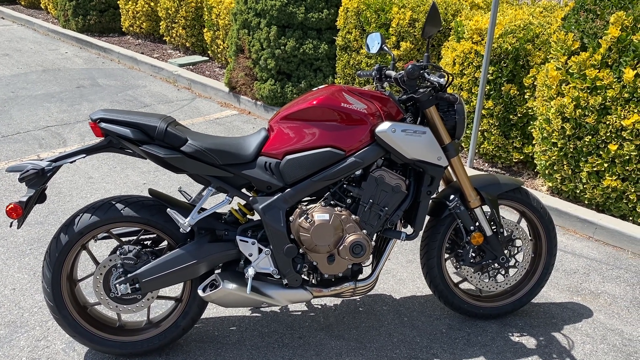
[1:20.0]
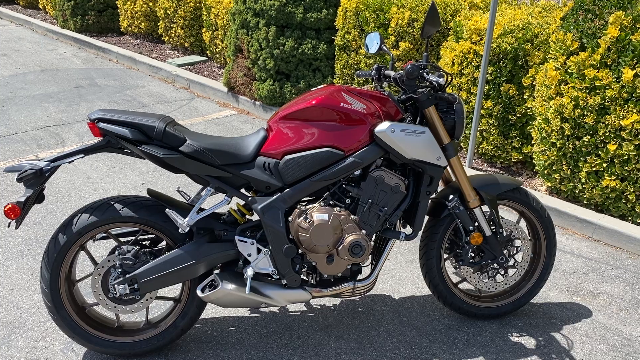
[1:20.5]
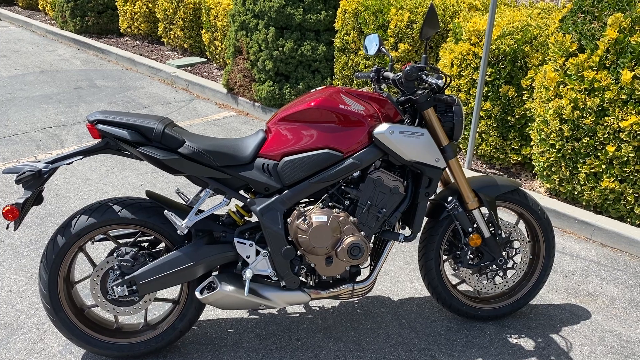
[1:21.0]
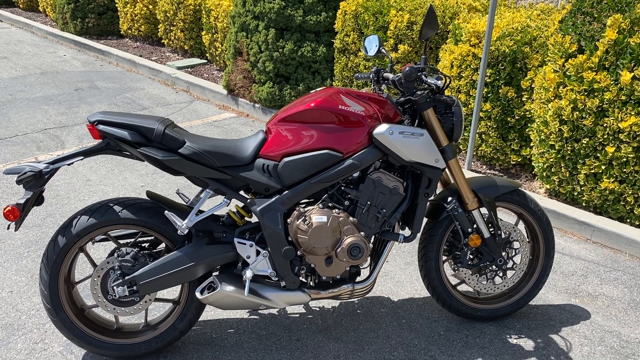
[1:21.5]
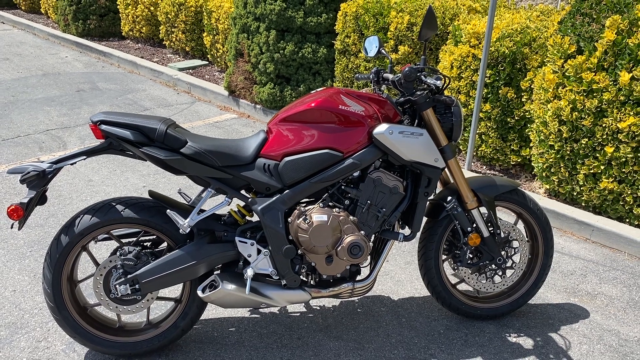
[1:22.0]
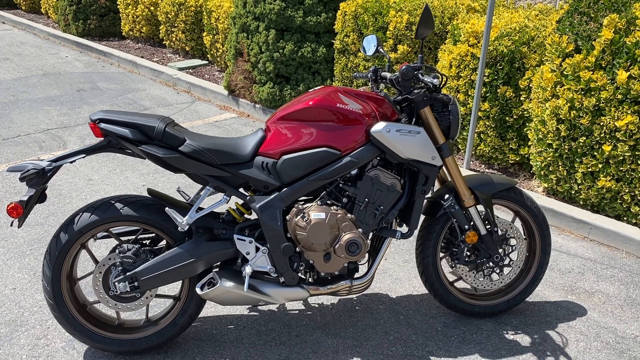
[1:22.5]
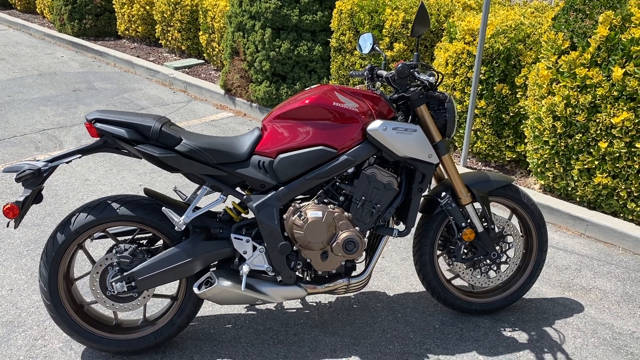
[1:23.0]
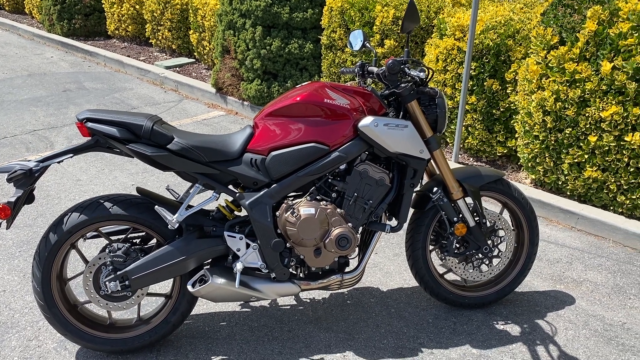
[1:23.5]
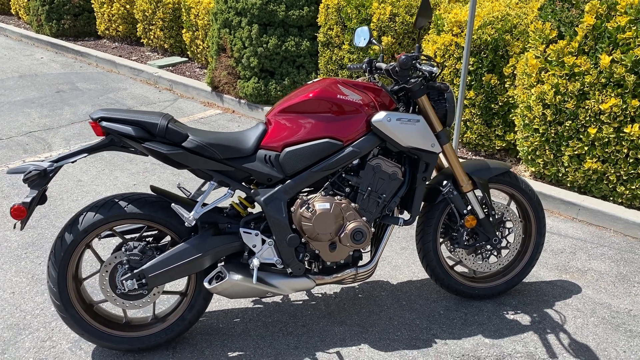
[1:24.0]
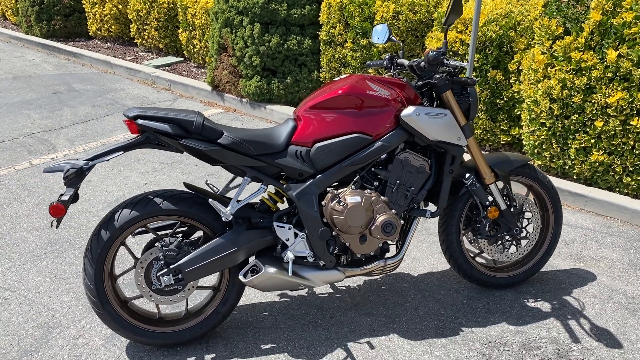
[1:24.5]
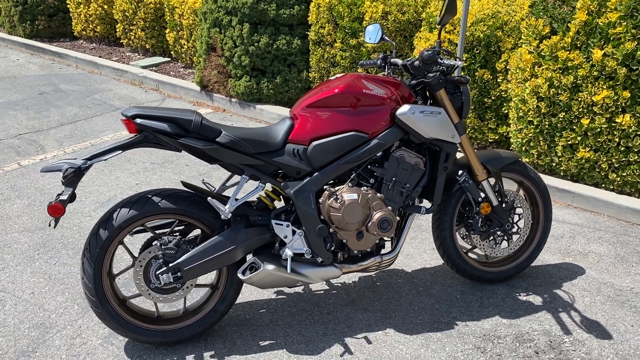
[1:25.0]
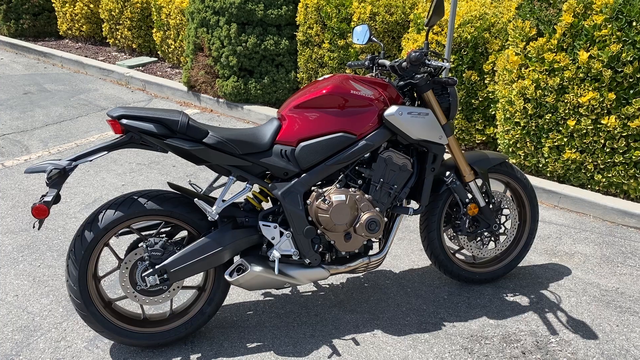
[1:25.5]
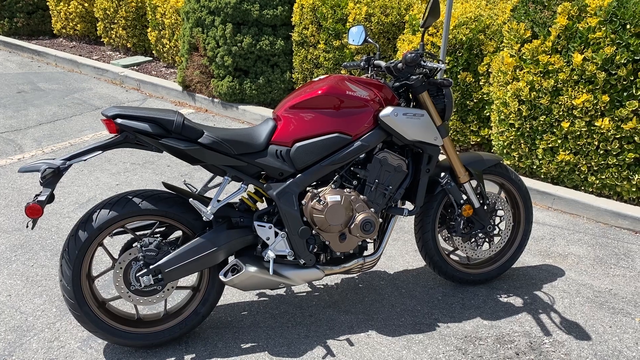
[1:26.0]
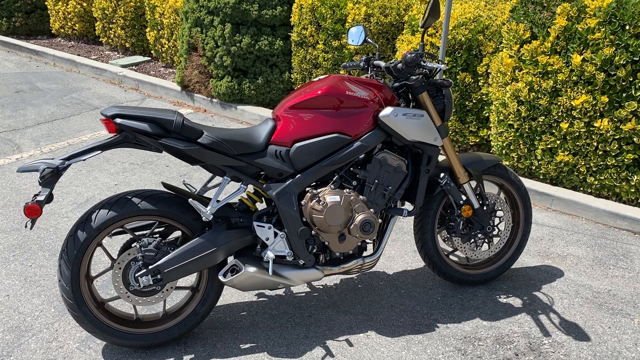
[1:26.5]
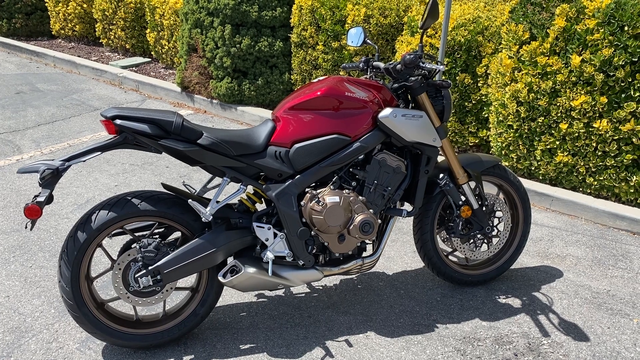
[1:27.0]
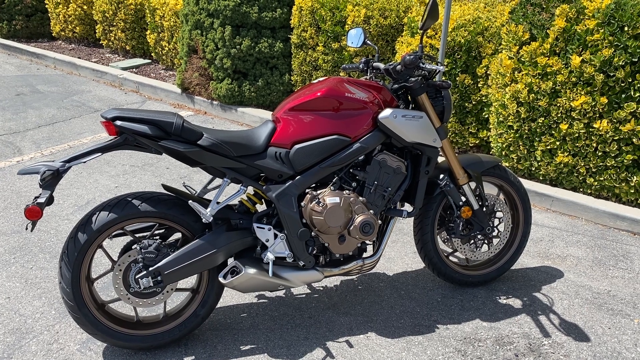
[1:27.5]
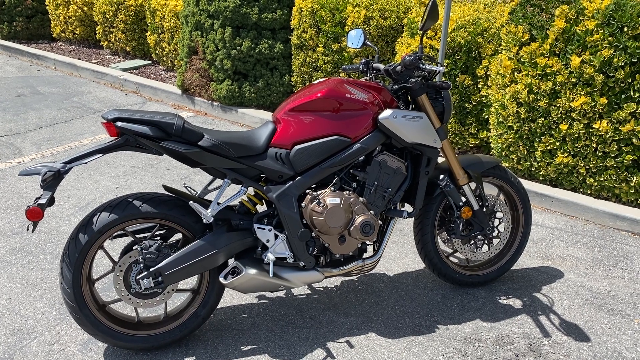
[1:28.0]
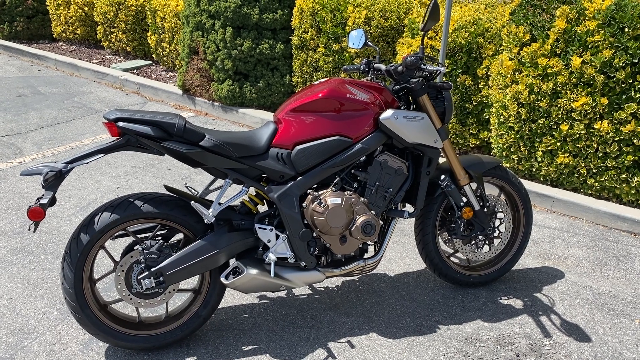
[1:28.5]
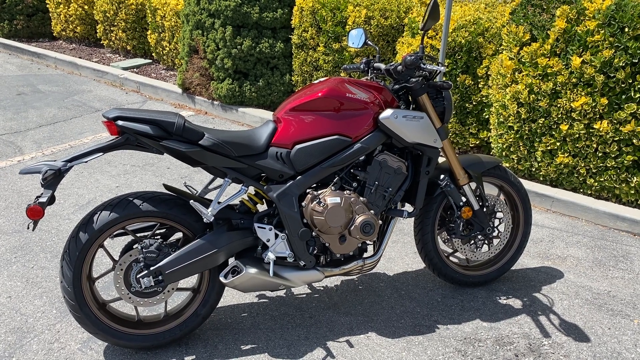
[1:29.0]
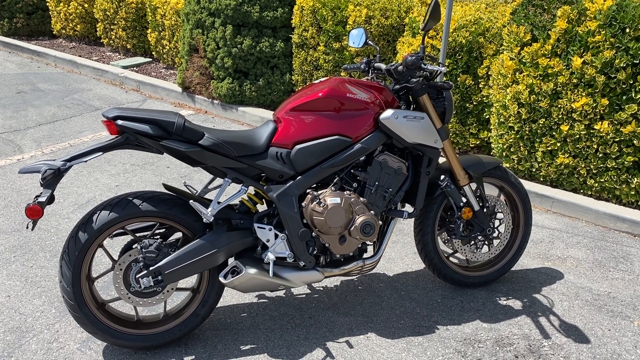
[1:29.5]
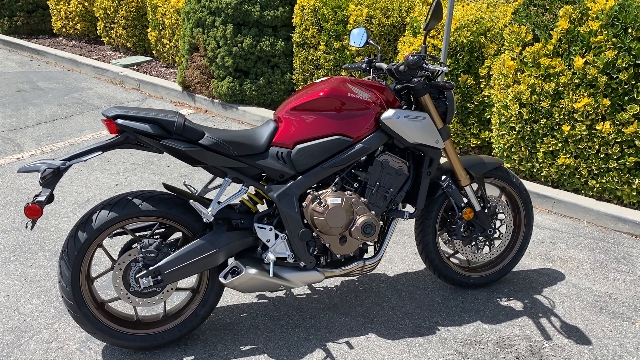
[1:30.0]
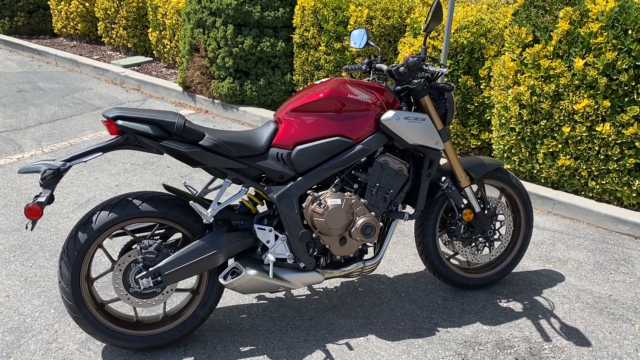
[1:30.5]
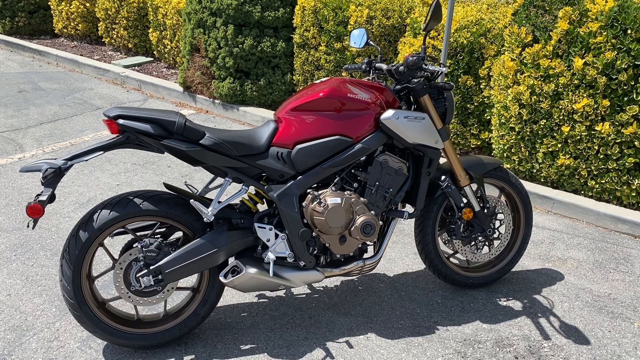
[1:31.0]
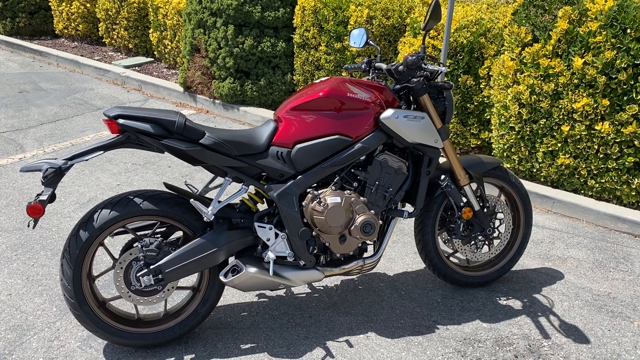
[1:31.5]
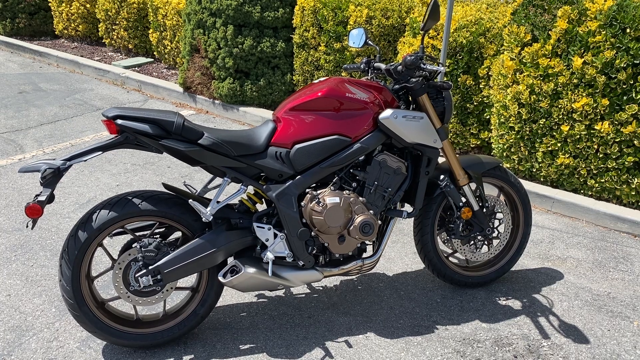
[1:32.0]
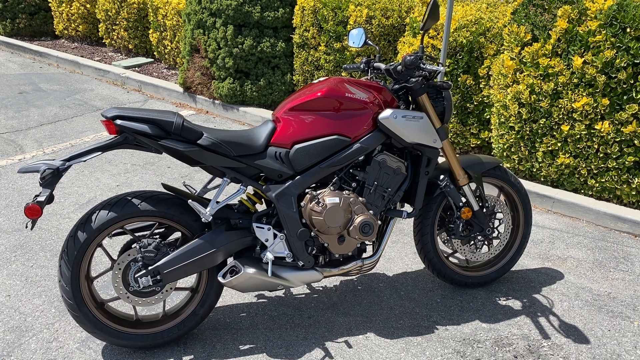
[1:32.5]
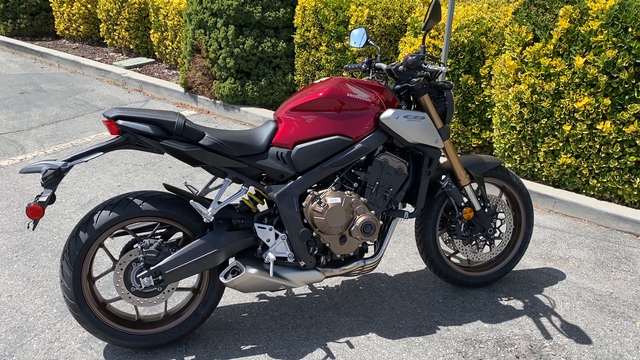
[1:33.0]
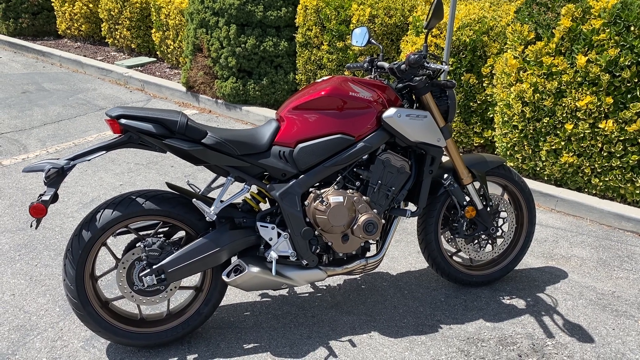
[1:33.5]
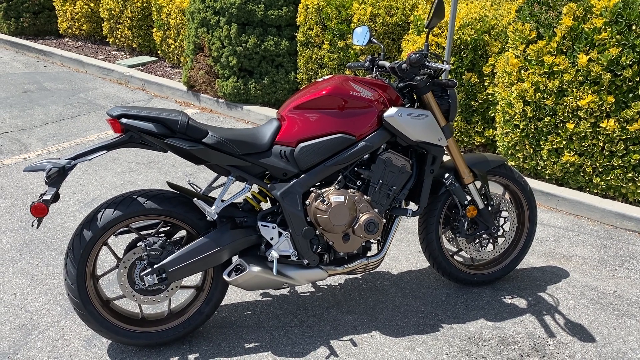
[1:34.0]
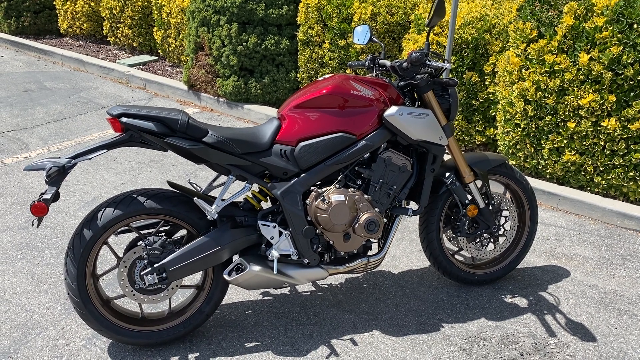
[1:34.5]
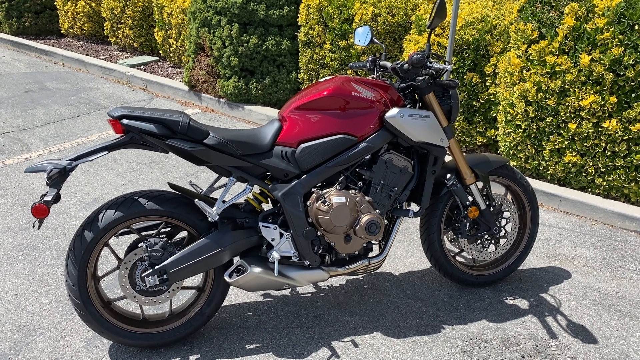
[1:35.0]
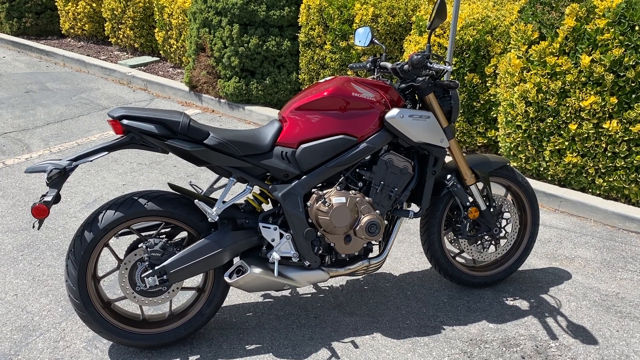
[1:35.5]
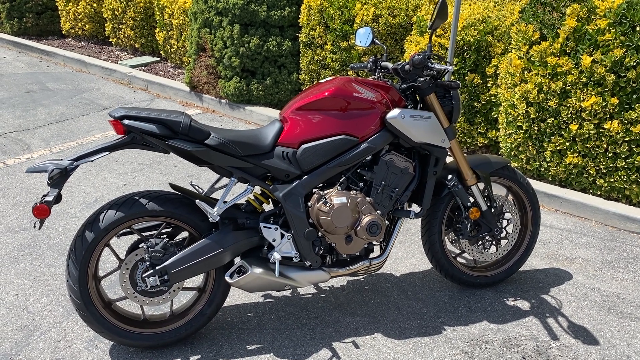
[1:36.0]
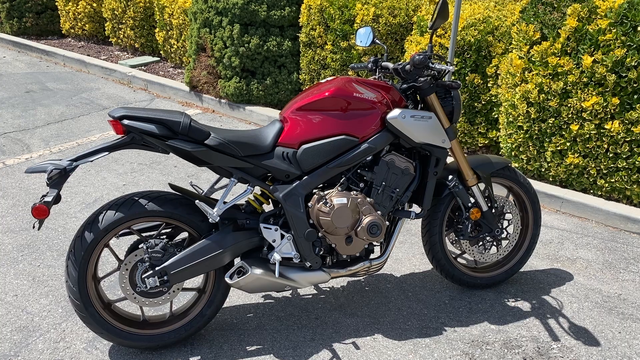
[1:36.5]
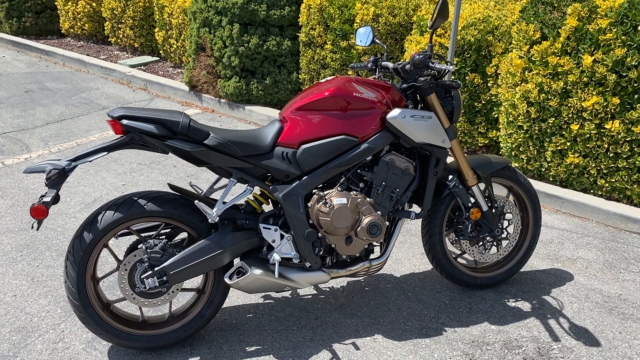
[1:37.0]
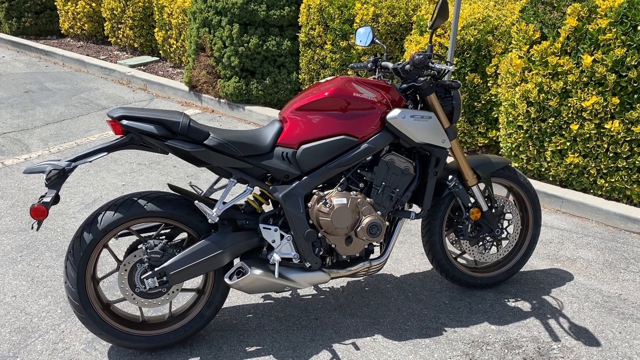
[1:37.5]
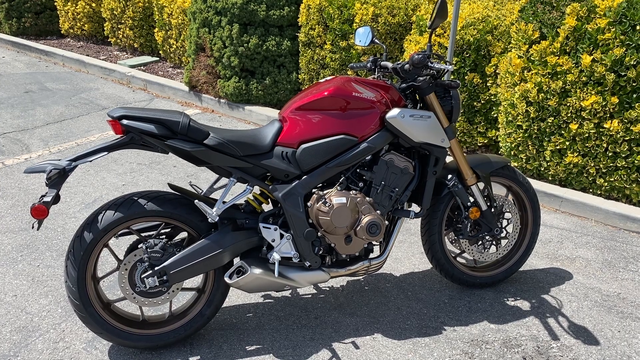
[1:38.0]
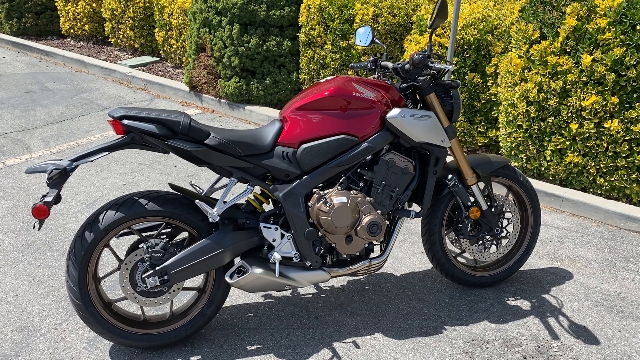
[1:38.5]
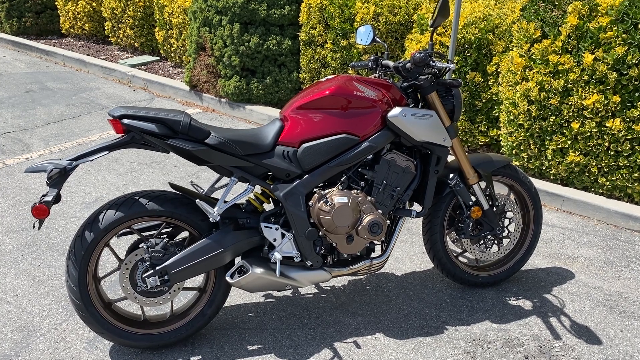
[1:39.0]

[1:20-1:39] A person shows a Honda motorcycle with keys in it that have a tag, apparently because it is for a customer. The person is at the back, or slightly toward the back, and does not walk around or touch anything to point anything out. The tailpipe is on the right-hand side and the kickstand on the left-hand side. The taillights are red, the gas tank is red, the engine is gold and black, and there are some silver parts. The brakes appear silver, the tailpipe is silver, the mirrors and handlebars are black, and the whole front part where the phone goes is black.